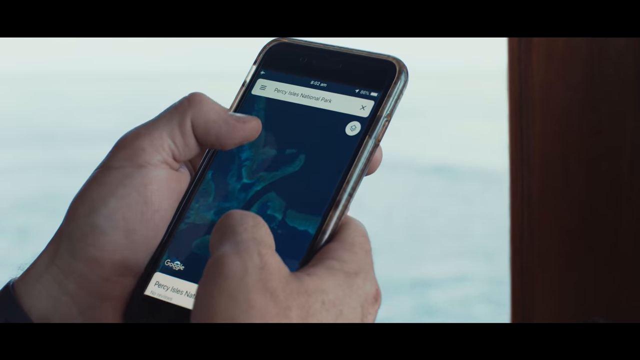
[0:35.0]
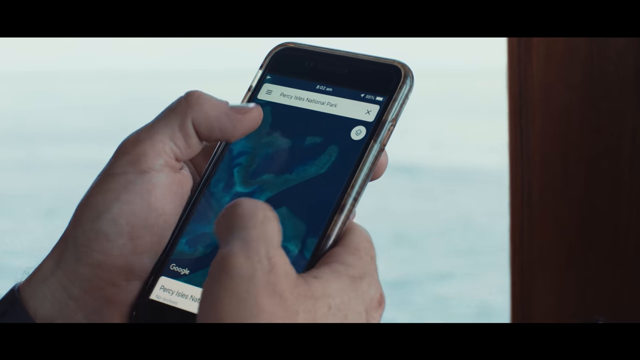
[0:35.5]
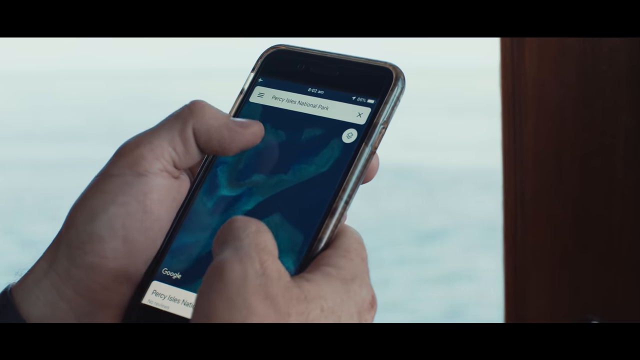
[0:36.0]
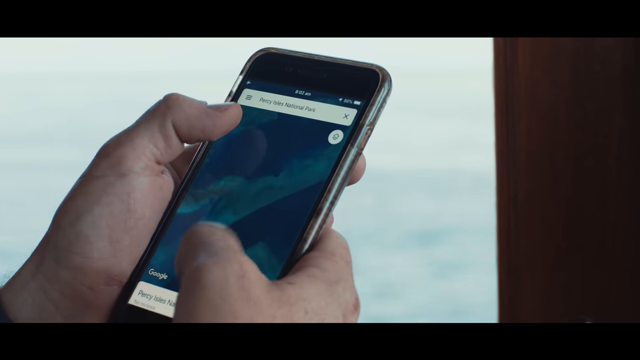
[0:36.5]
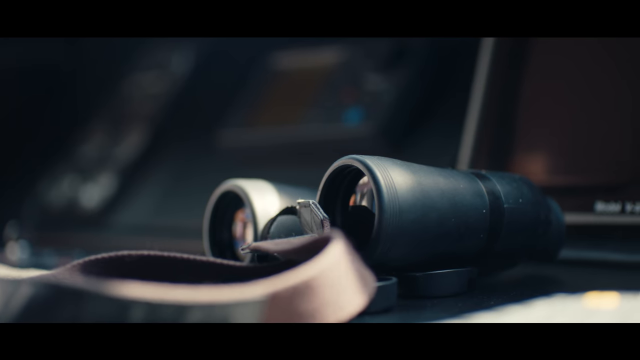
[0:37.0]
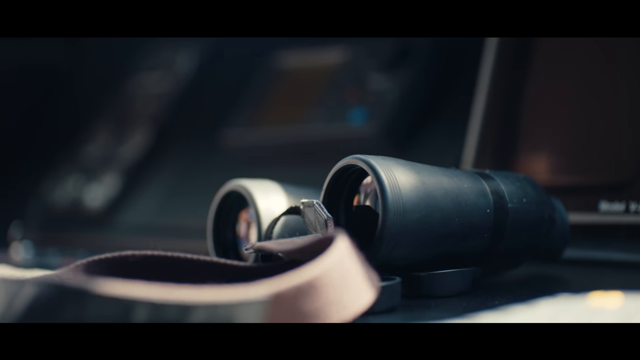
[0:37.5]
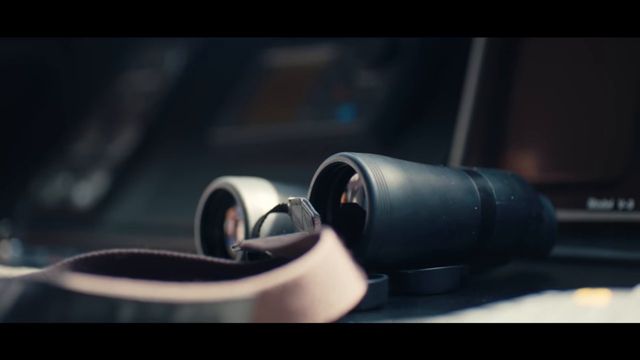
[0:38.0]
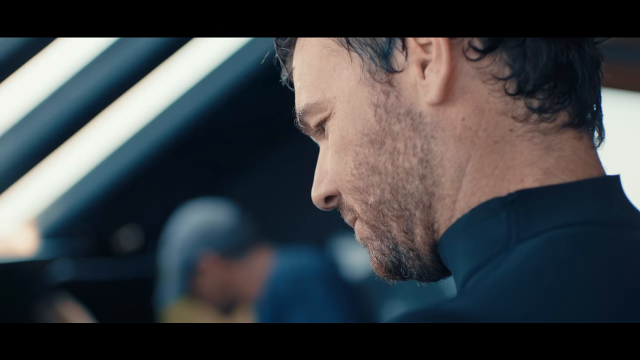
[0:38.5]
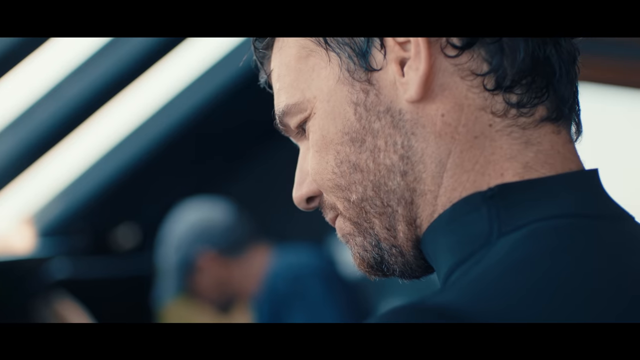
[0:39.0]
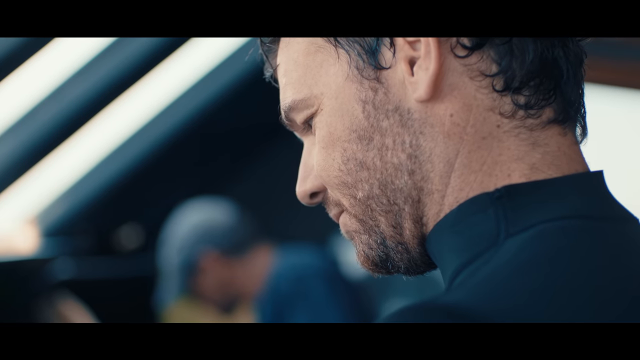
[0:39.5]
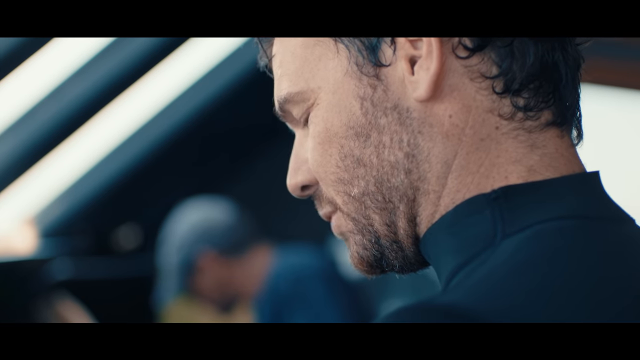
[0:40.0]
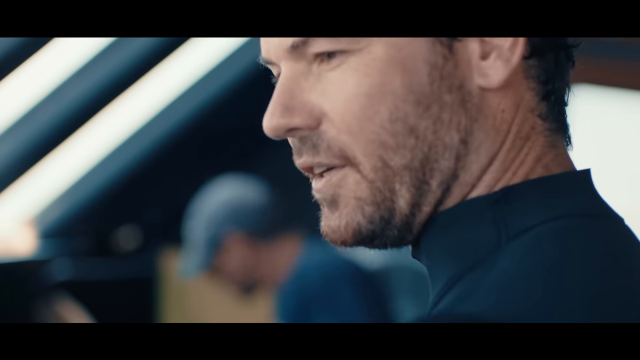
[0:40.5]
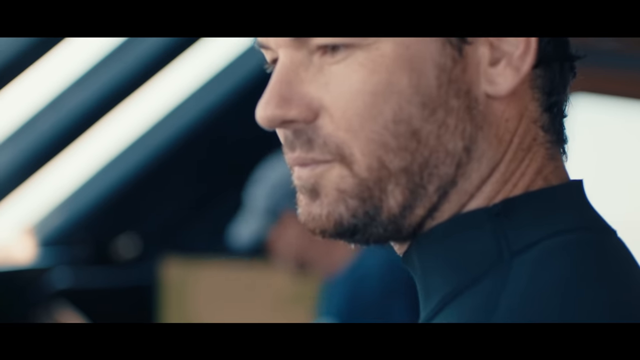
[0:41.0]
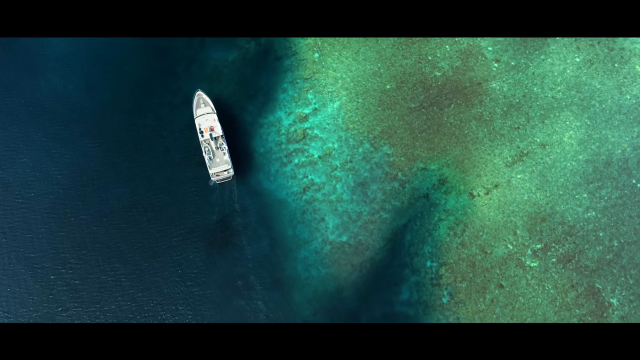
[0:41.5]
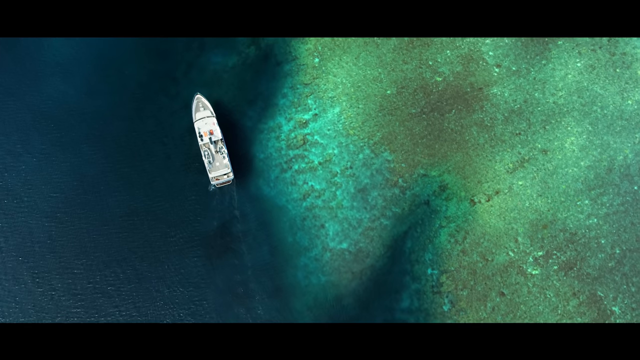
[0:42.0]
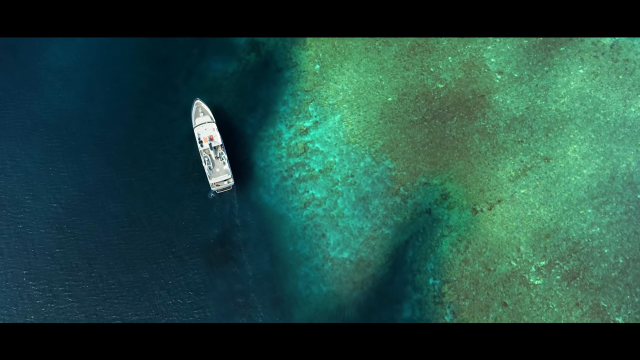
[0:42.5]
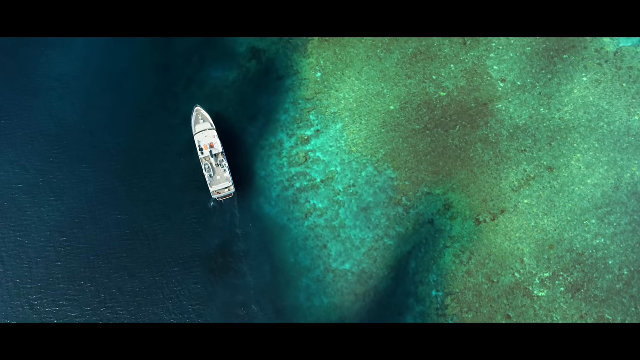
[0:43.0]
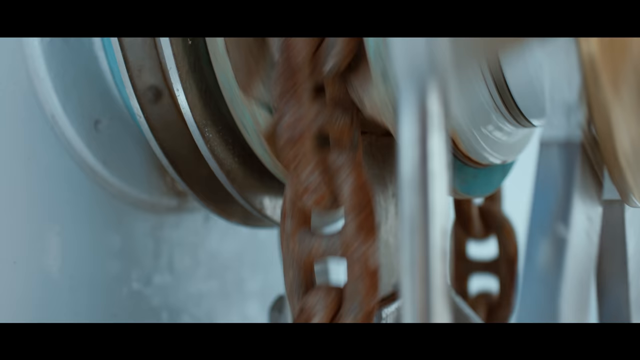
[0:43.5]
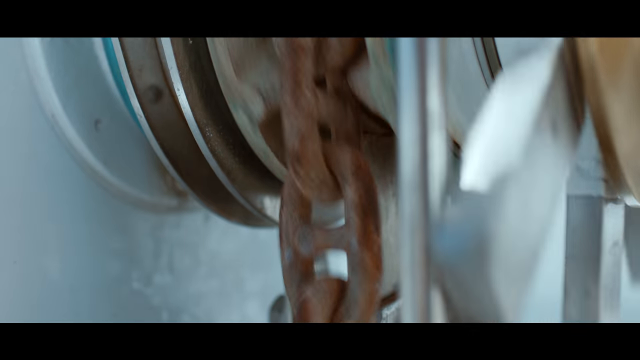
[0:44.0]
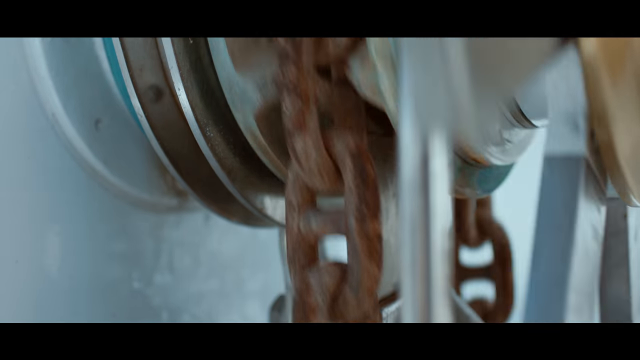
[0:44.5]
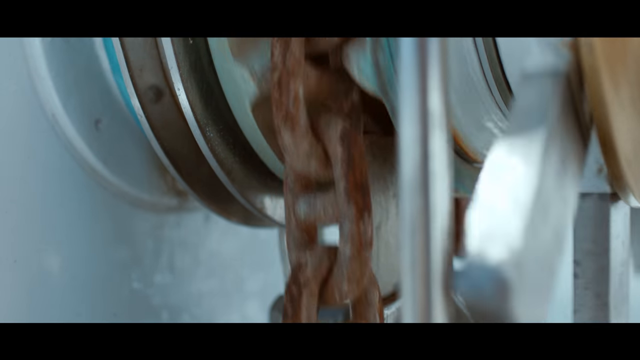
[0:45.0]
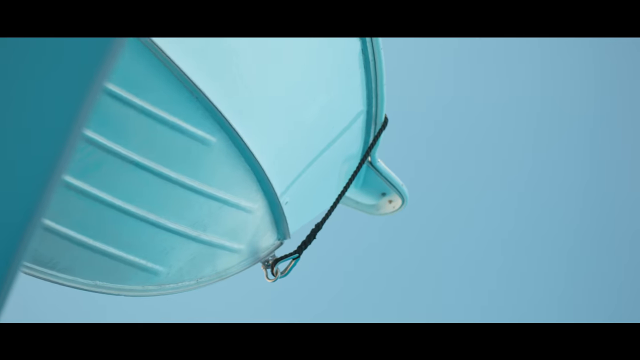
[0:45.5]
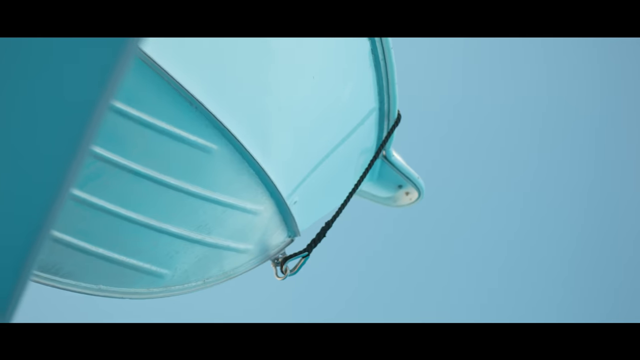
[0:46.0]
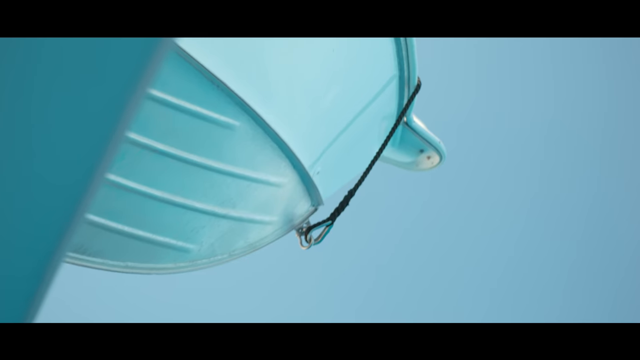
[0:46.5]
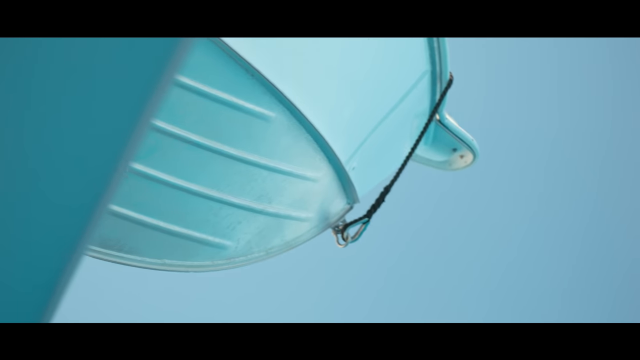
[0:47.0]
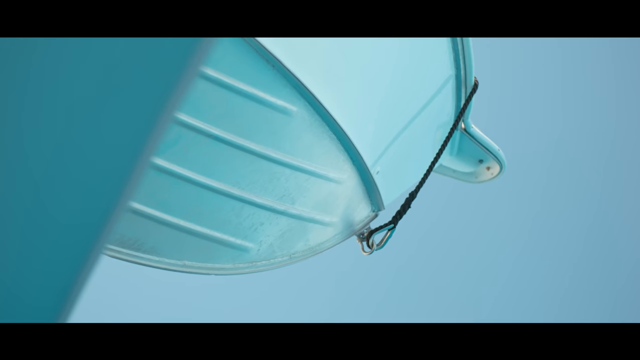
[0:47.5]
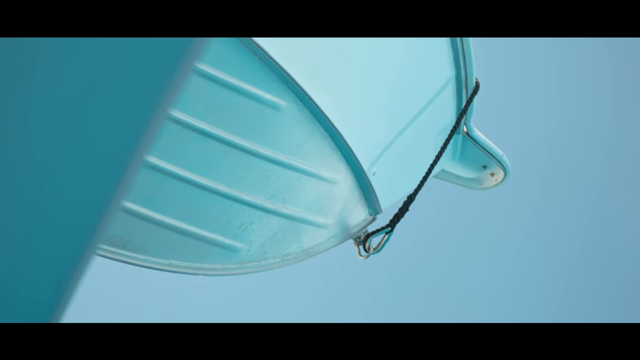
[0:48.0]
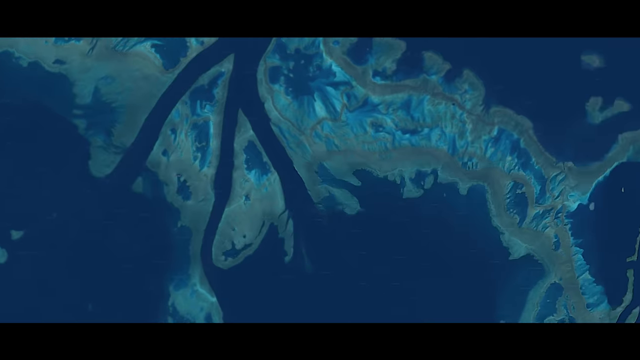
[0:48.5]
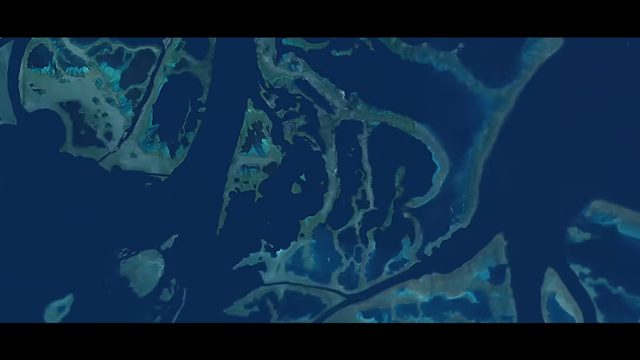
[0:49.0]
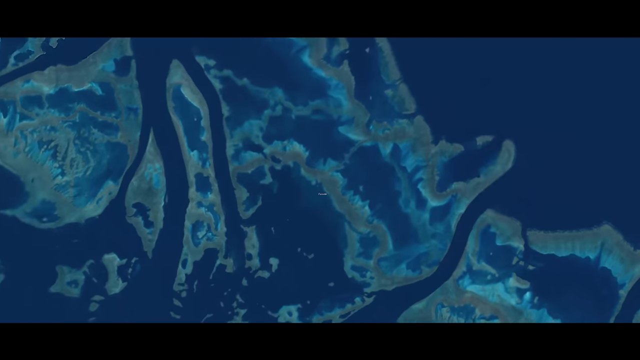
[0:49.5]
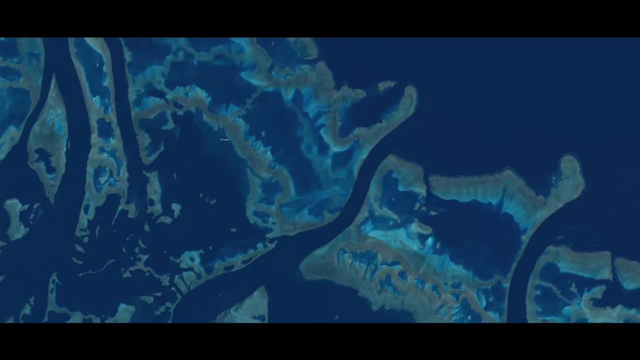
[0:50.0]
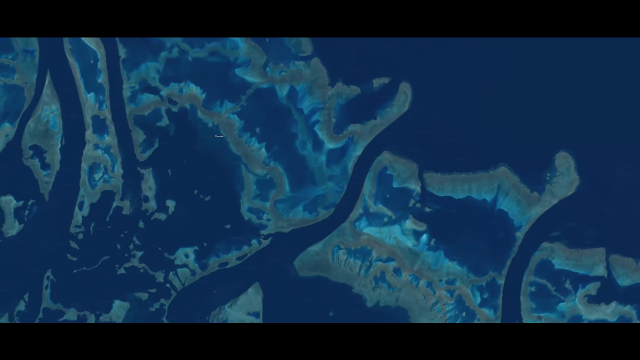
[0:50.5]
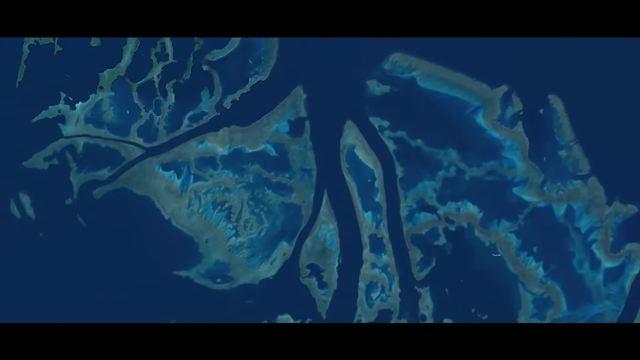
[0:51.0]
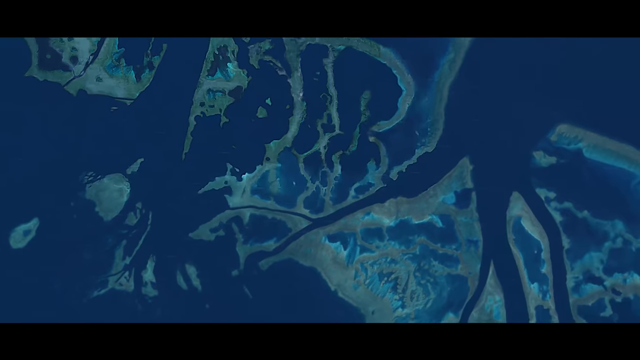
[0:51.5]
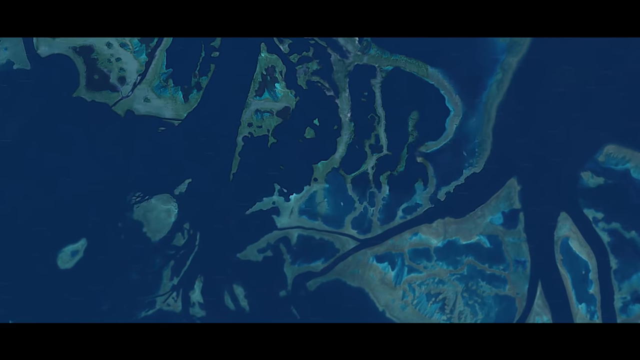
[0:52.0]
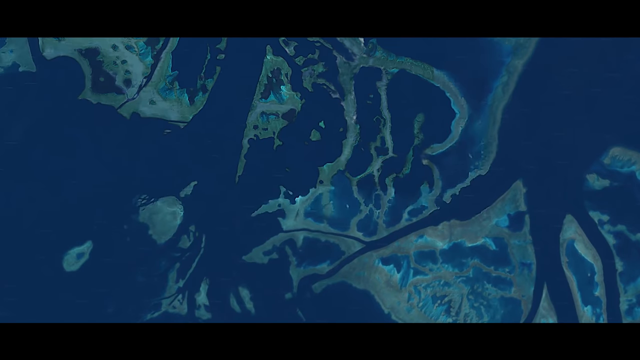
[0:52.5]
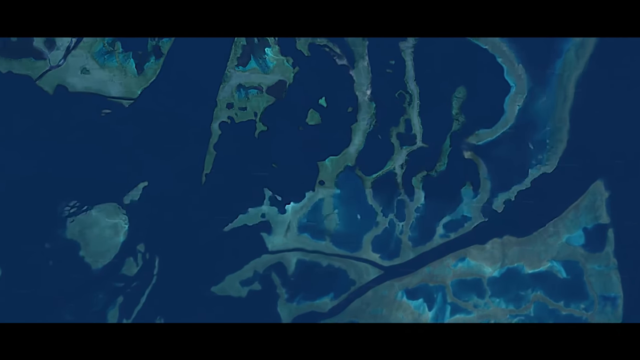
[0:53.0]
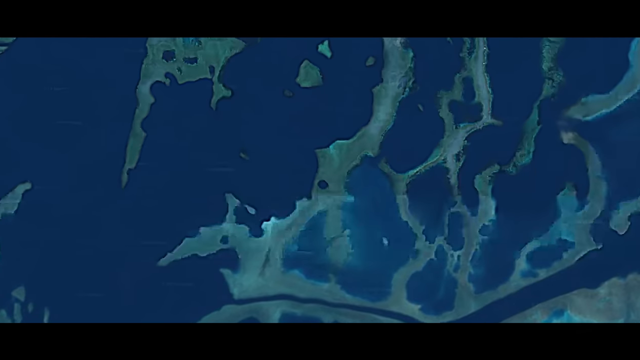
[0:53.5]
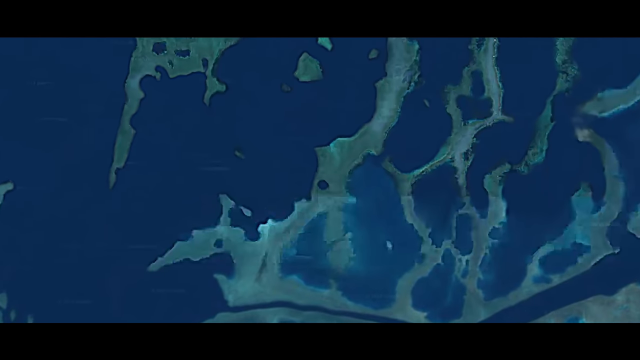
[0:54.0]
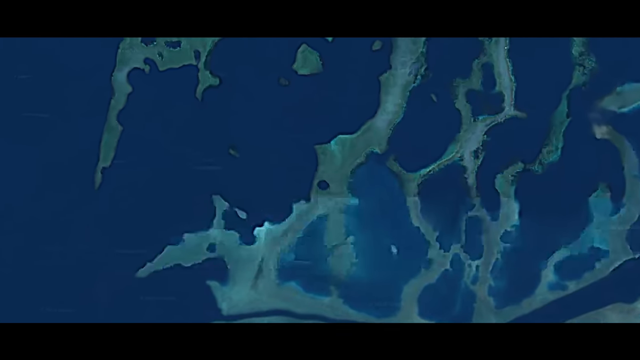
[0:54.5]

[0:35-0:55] Someone uses a phone, spreading their thumbs to expand the screen. A ship is on the water in a blue hole, and a map shows various openings amongst sandbars and coral reefs. There is a set of black binoculars with a tan strap. A long white ship cruises alongside a sandbar at a slow pace. White text at the top reads "finding blue holes with Google Maps." Two men are shown primarily. One looks like he is wearing a scuba diving suit; he has short brown curly hair and a scruffy chin. The other man has his back to the camera and looks like he is wearing a t-shirt and a gray-blue baseball hat. The edge of a white lifeboat with a light brown rope is visible. A rusty chain spins around the edge of a cog that is being turned, presumably to help steer the boat.